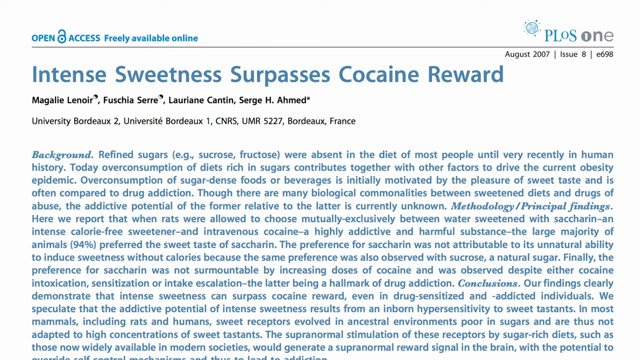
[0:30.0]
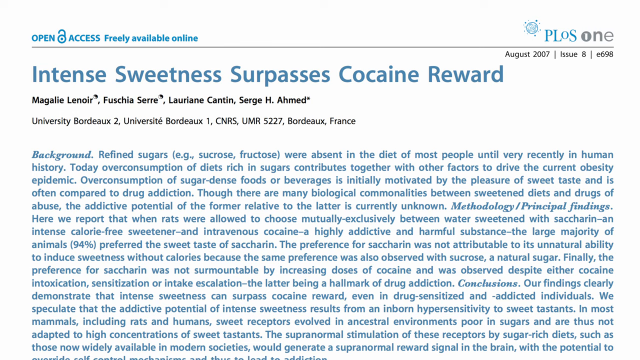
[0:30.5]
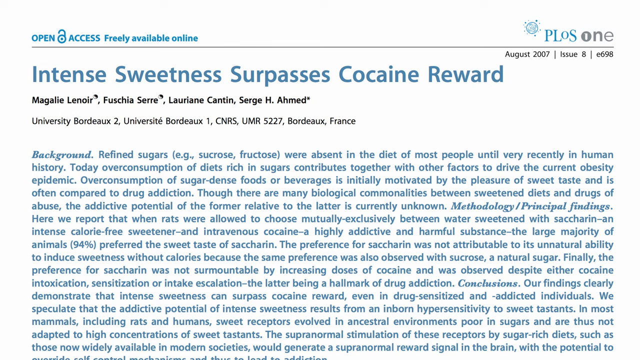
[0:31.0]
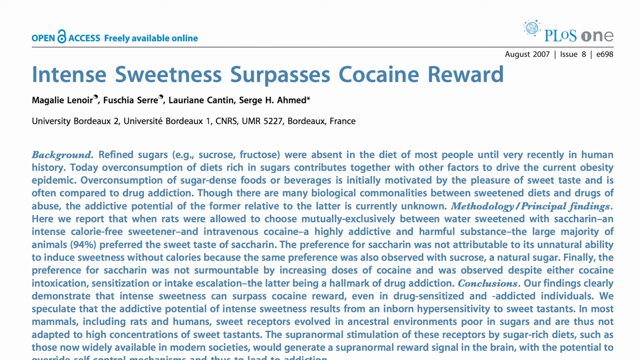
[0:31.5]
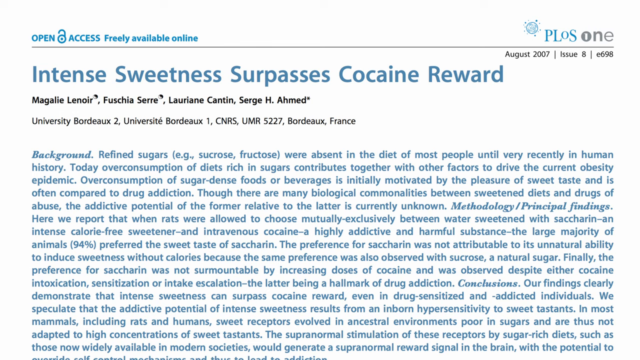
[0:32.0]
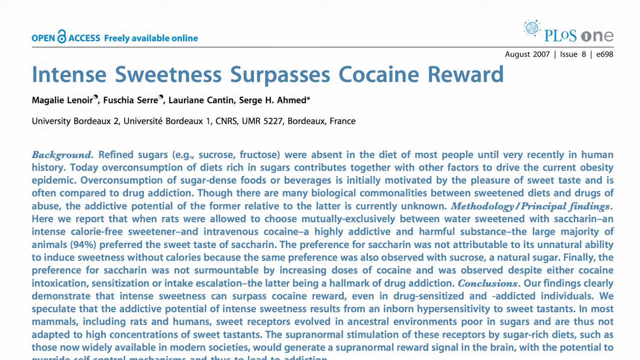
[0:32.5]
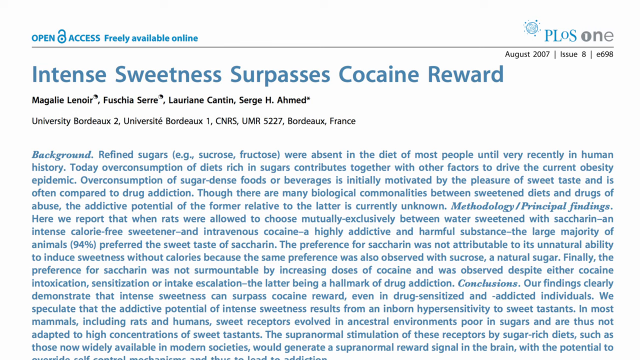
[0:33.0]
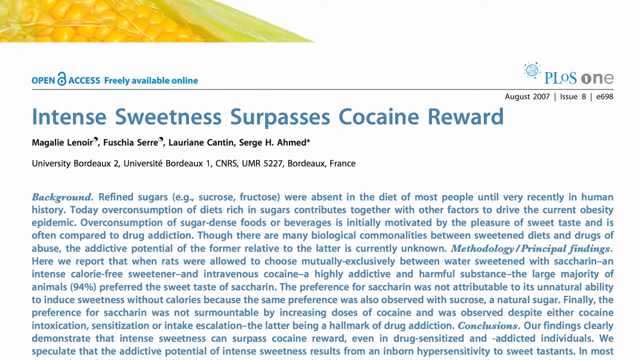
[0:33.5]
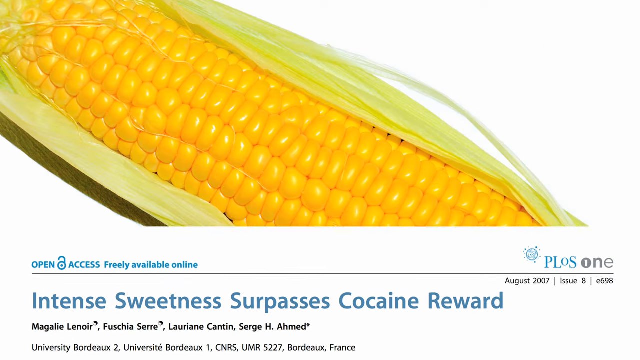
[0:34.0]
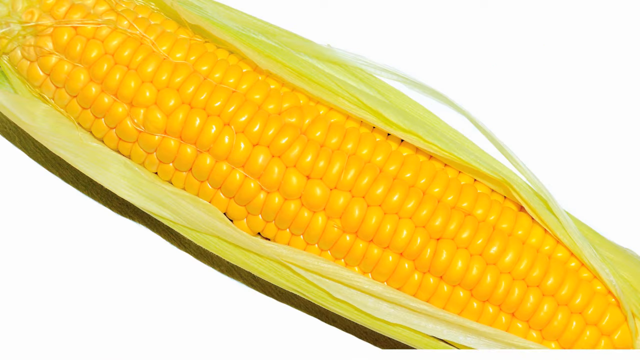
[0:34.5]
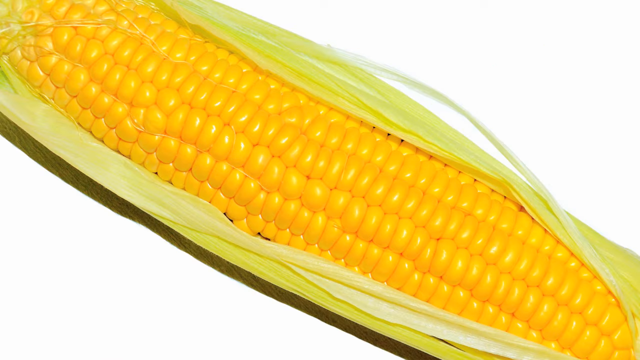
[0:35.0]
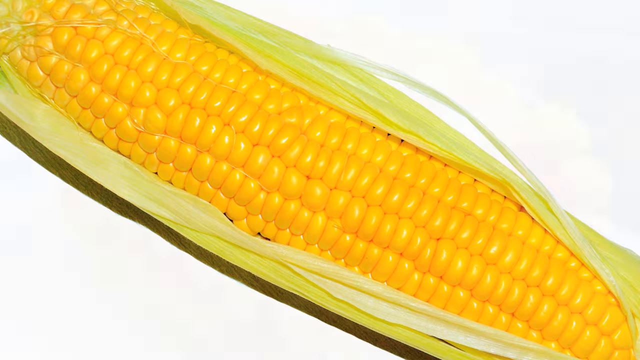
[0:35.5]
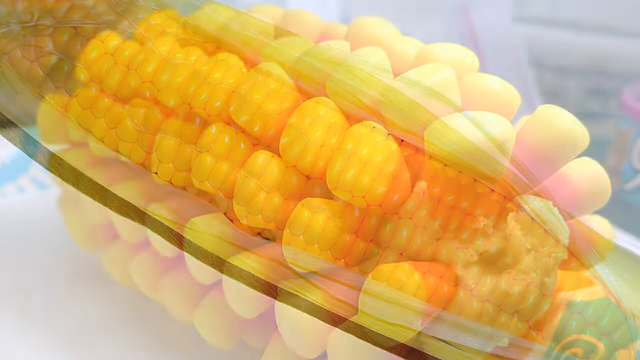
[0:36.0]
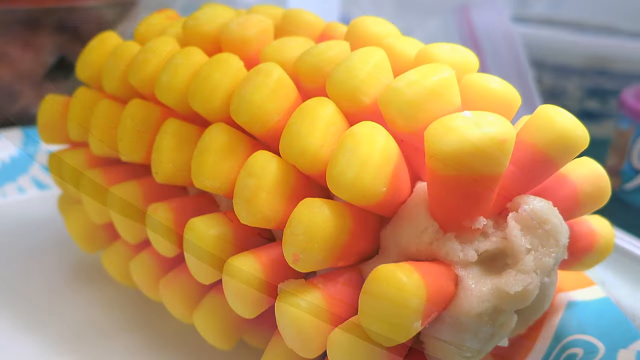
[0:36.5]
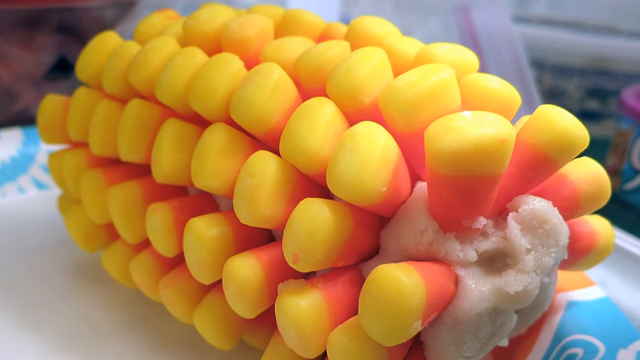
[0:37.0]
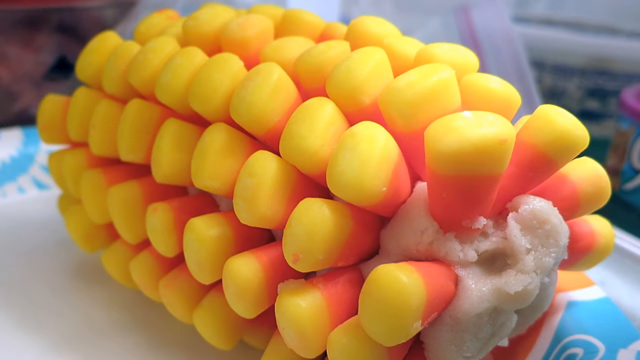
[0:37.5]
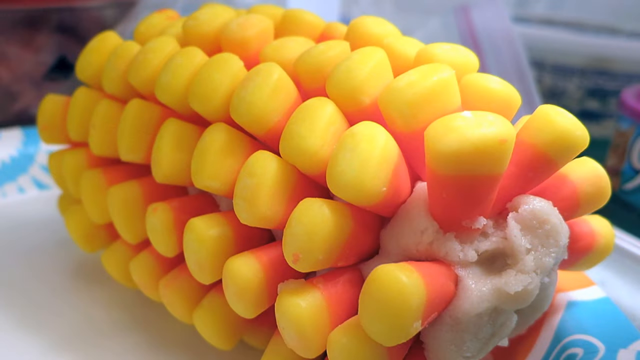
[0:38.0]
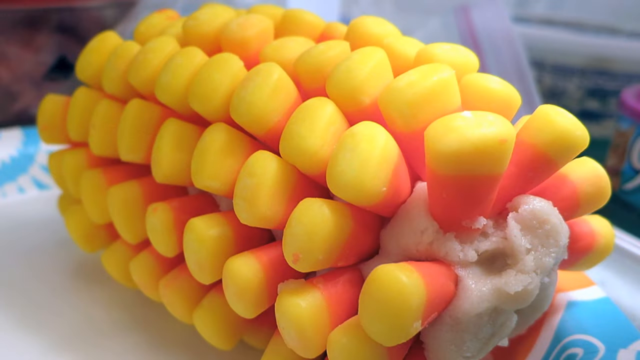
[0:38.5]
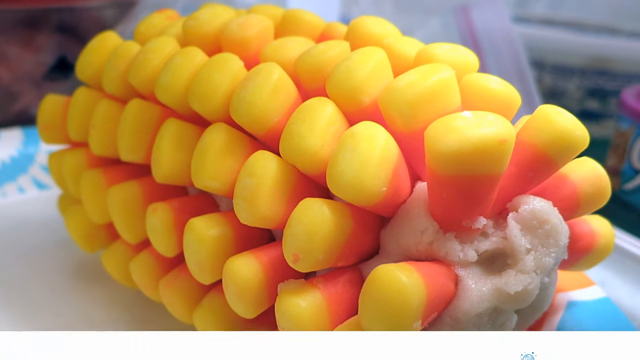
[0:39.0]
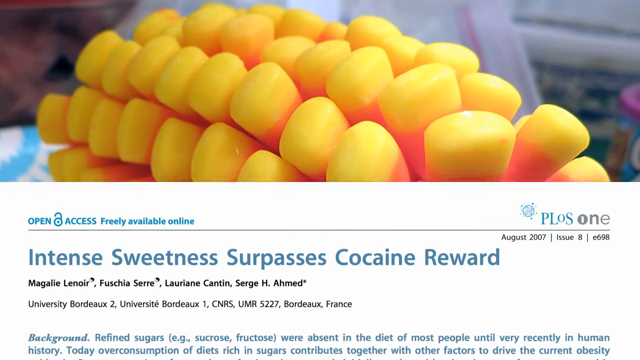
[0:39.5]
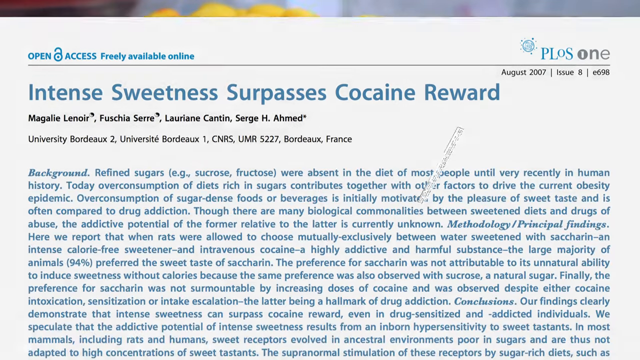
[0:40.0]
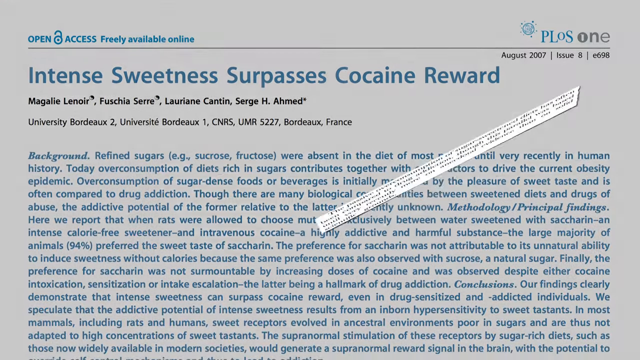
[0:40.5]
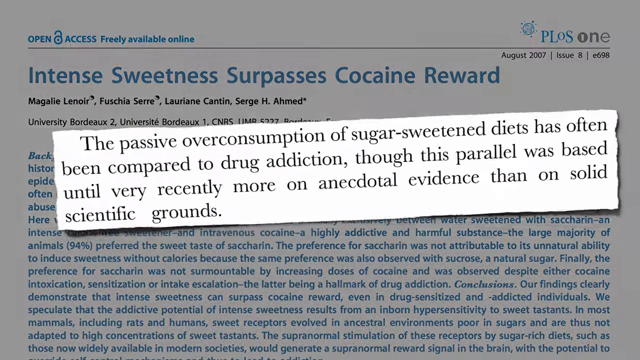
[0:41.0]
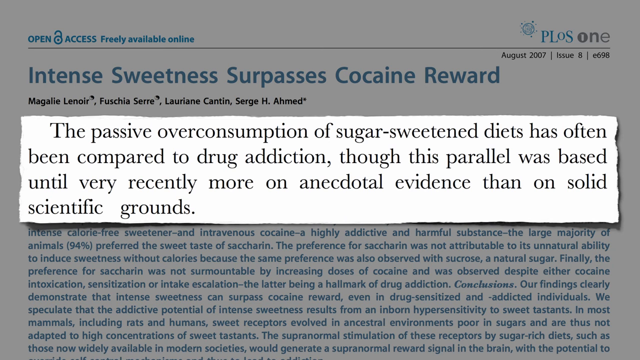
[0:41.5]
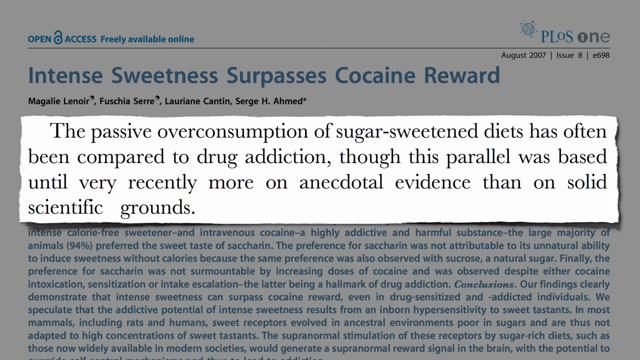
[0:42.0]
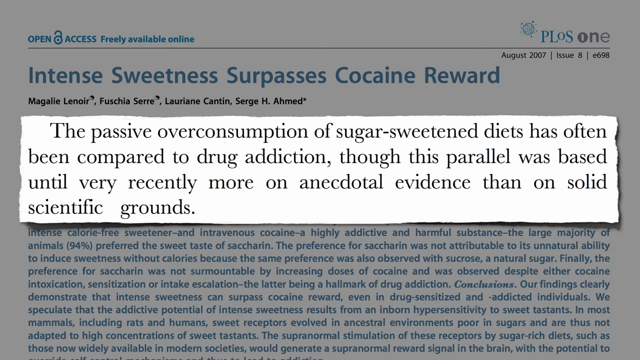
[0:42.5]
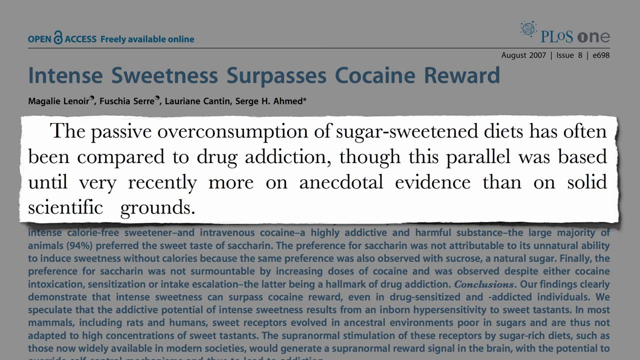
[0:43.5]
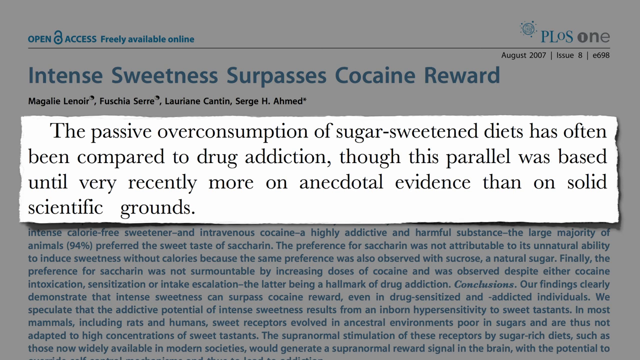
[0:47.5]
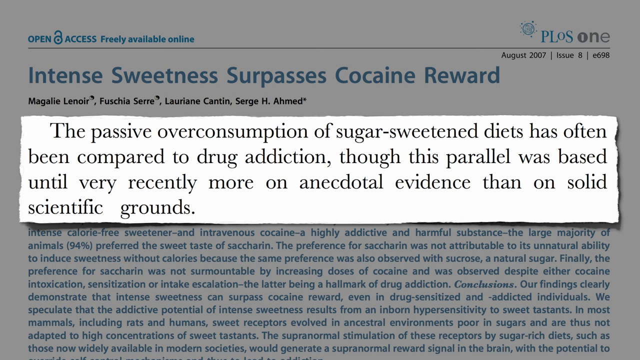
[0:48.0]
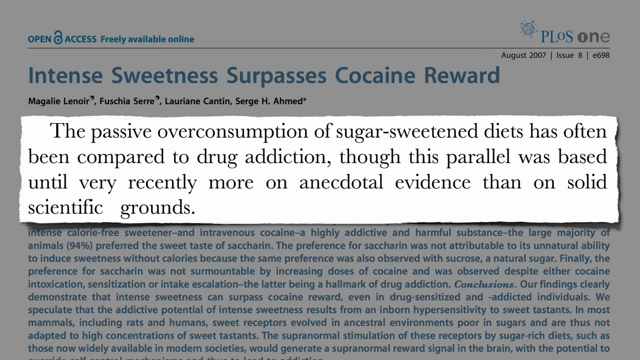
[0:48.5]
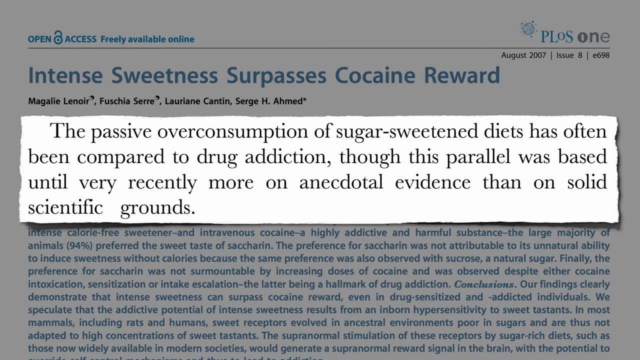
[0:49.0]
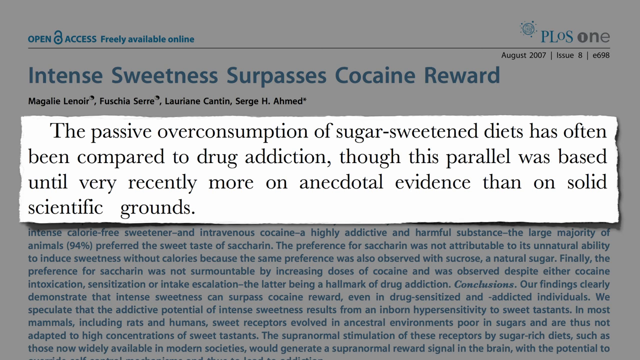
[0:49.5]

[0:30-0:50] The frame is a little wider than it is tall. It opens on an article titled "Intense Sweetness Surpasses Cocaine Reward", with a wall of text of several paragraphs below the title. The article slides down out of the frame, giving way to a still slide featuring an ear of corn running from the upper left to the lower right, with the husk still on either side and the corn revealed in the center. The view zooms out of that image and zooms into a different one: a bunch of candy corn stuck into a white mass in the center to emulate a cob of corn. Next comes a still that returns to the "Intense Sweetness Surpasses Cocaine Reward" article, now with one paragraph taken out, blown up and placed in the center on a white background while everything else behind it is grayed out. It reads: "The passive overconsumption of sugar-sweetened diets has often been compared to drug addiction, though this parallel was based until very recently more on anecdotal evidence than on solid scientific grounds."